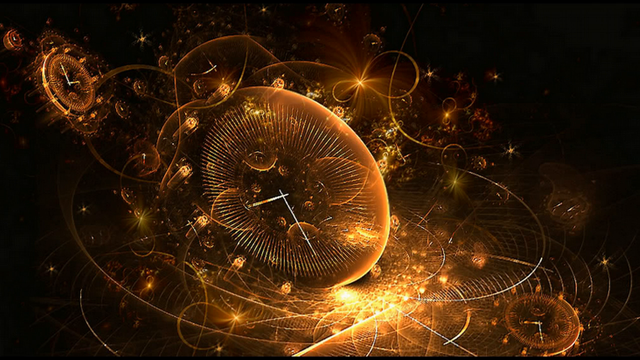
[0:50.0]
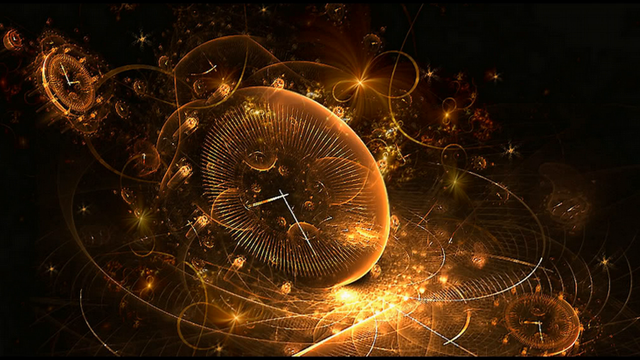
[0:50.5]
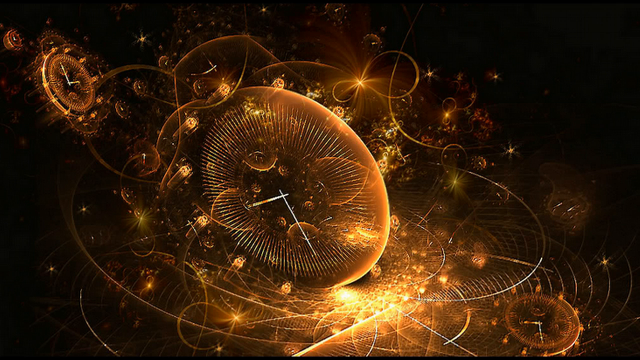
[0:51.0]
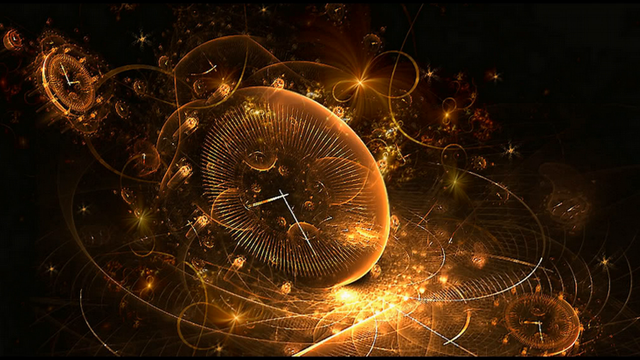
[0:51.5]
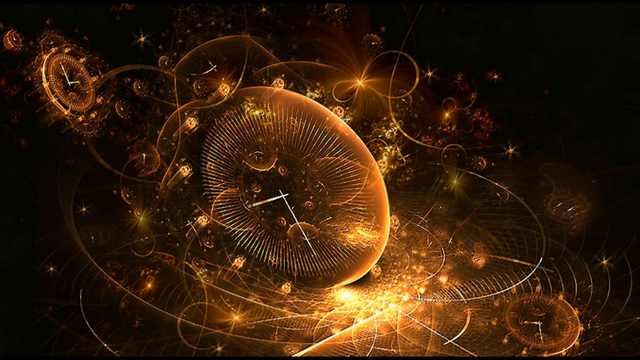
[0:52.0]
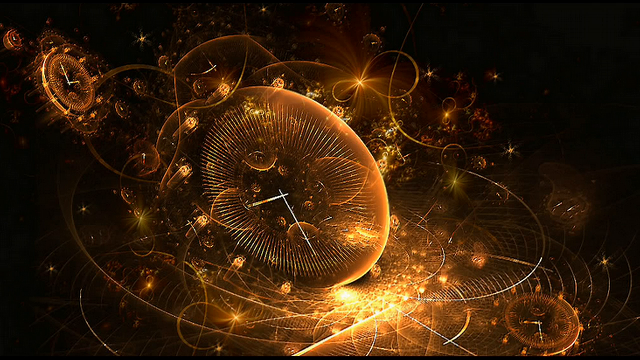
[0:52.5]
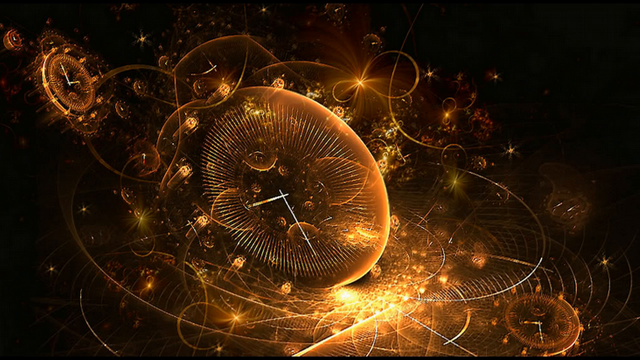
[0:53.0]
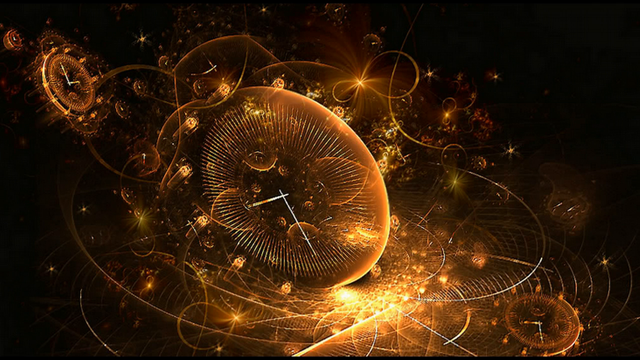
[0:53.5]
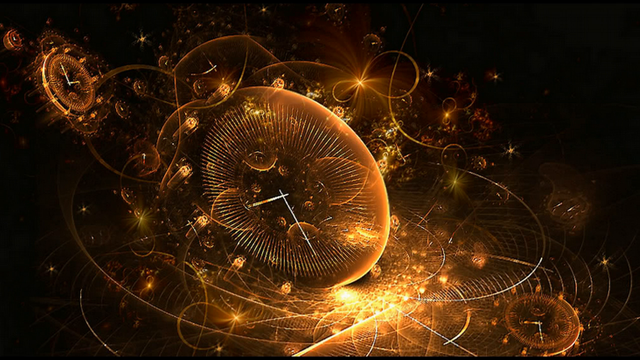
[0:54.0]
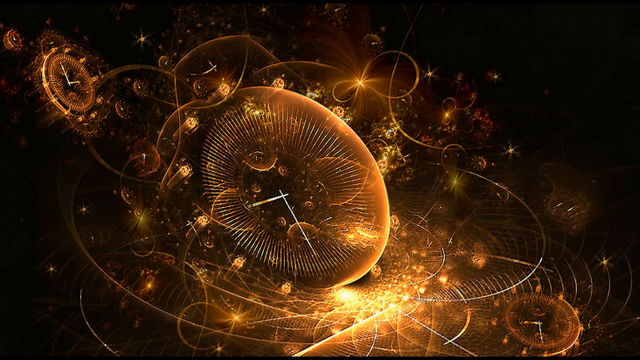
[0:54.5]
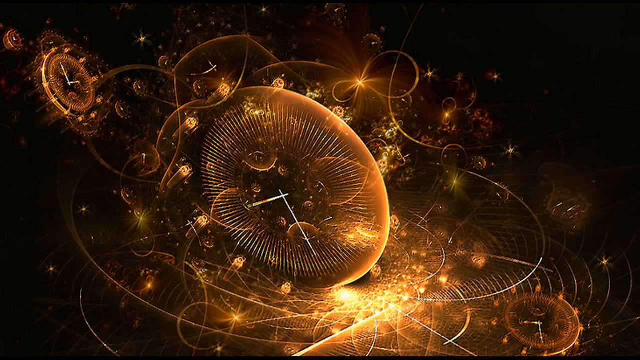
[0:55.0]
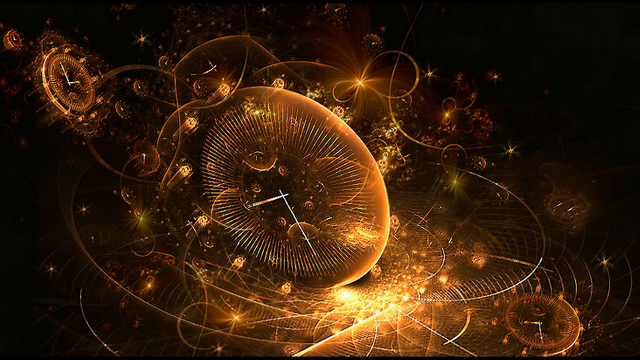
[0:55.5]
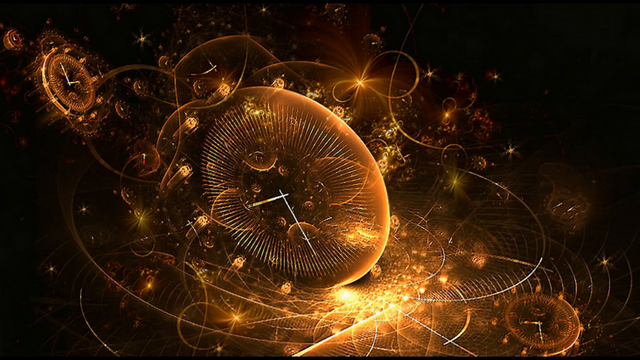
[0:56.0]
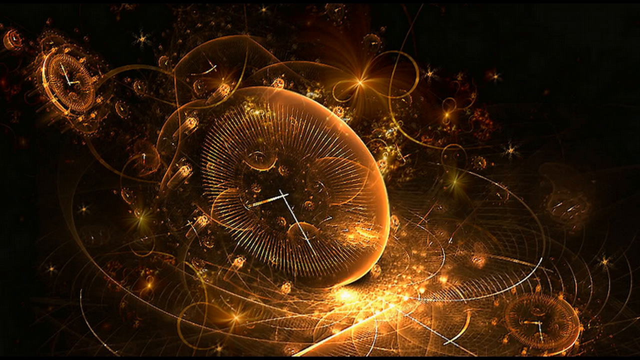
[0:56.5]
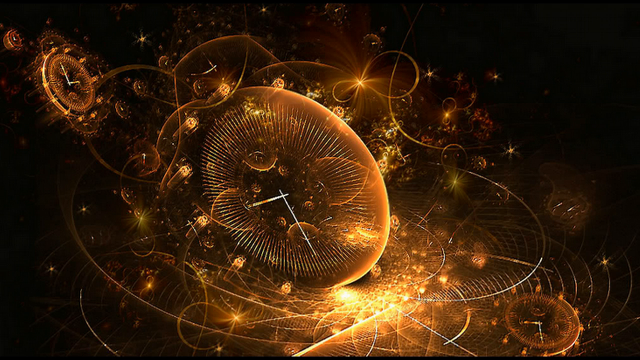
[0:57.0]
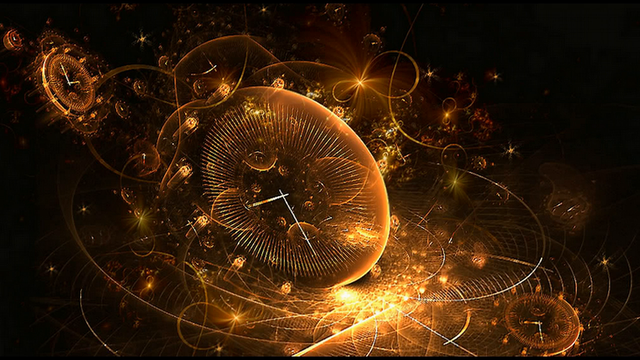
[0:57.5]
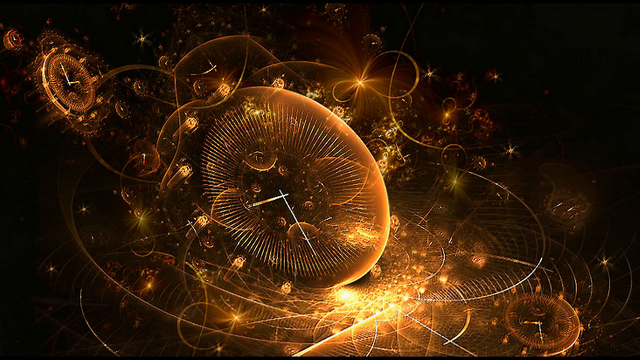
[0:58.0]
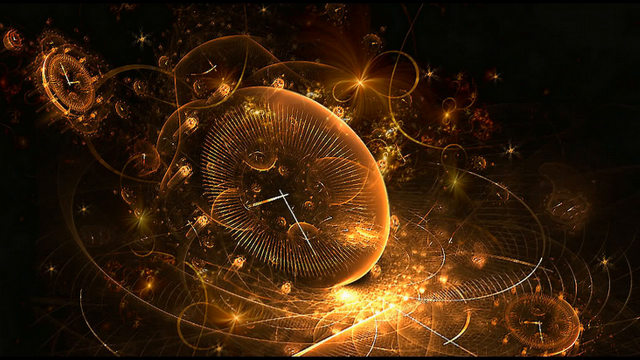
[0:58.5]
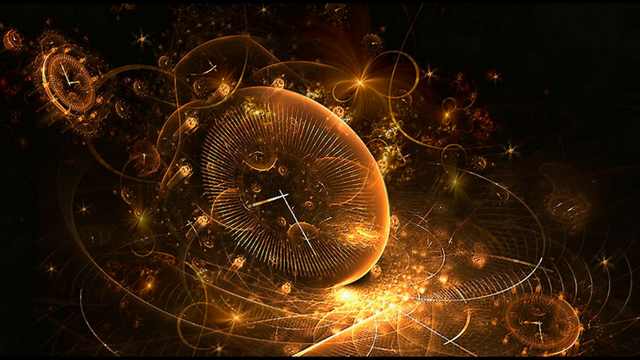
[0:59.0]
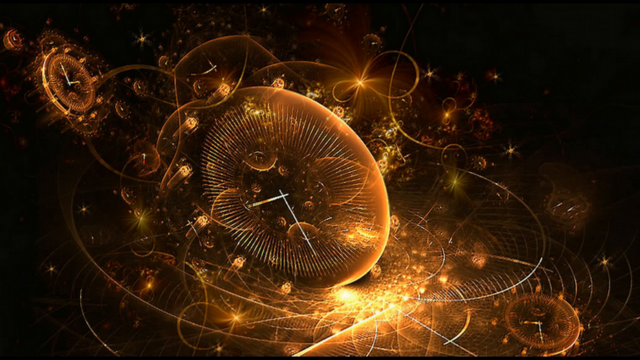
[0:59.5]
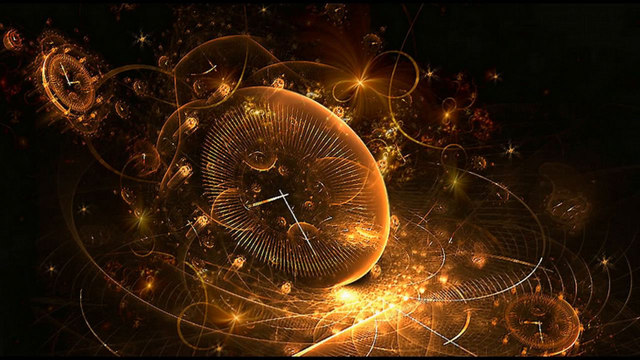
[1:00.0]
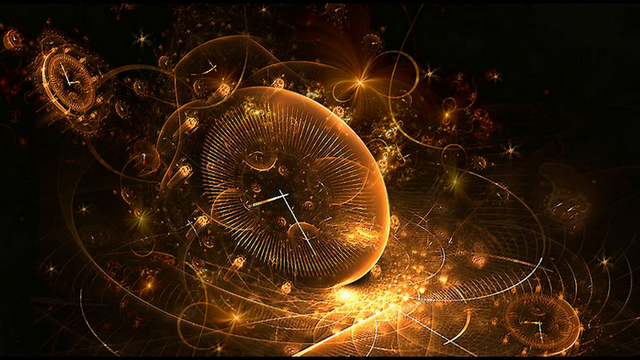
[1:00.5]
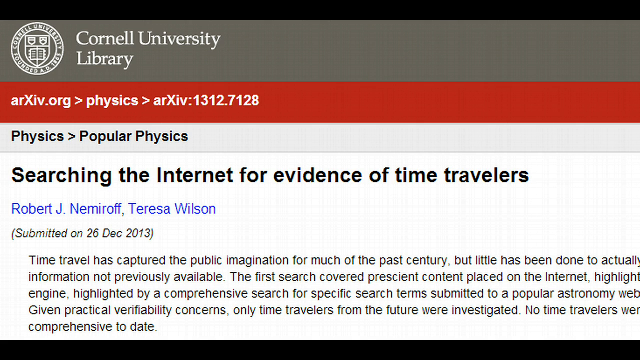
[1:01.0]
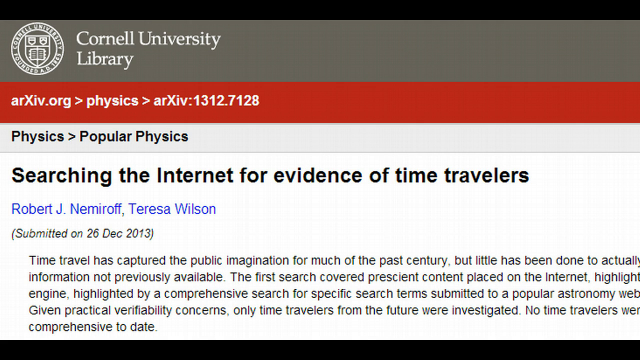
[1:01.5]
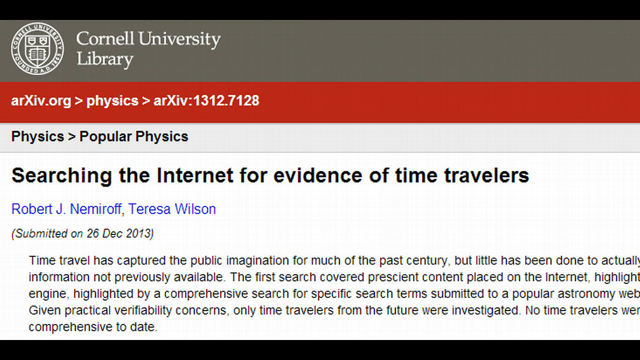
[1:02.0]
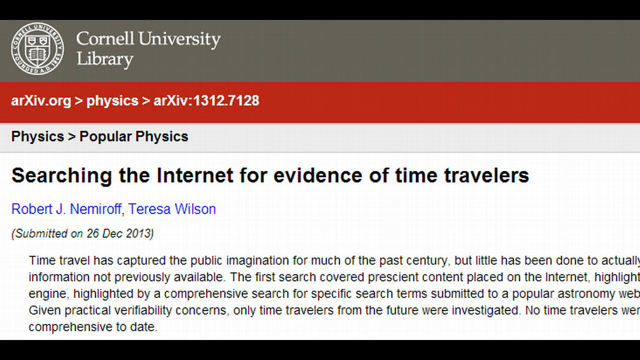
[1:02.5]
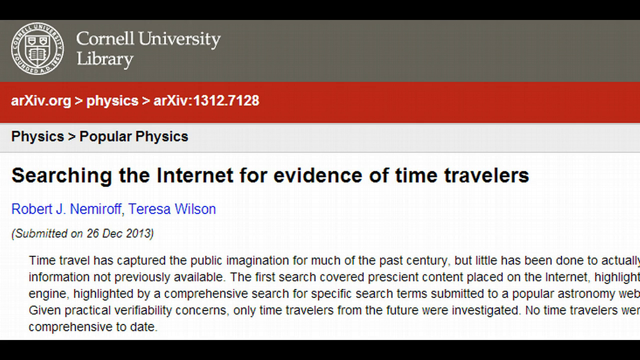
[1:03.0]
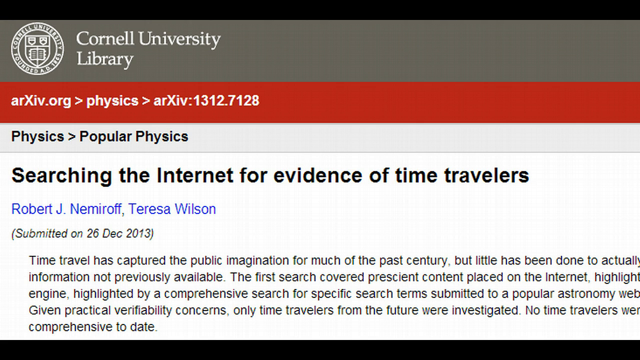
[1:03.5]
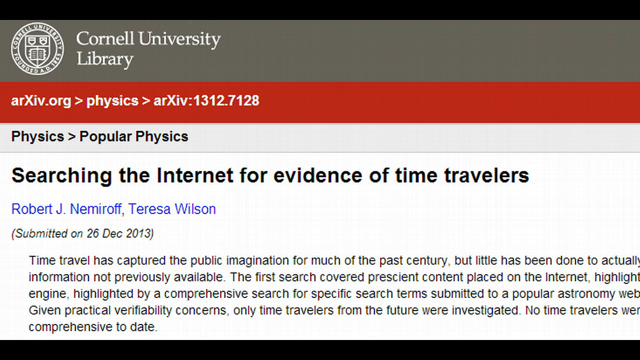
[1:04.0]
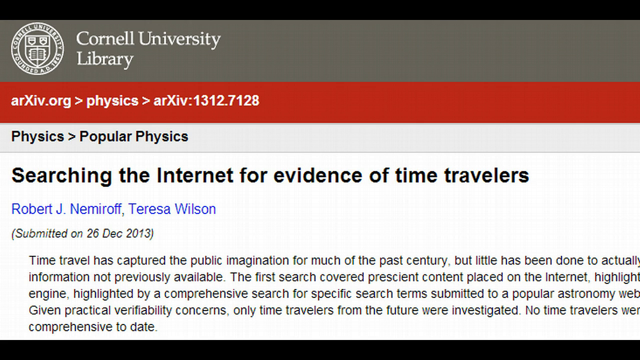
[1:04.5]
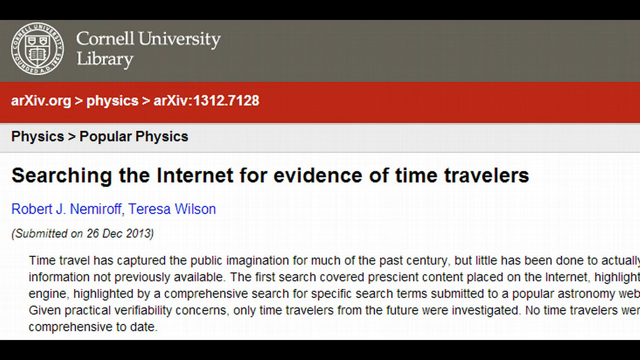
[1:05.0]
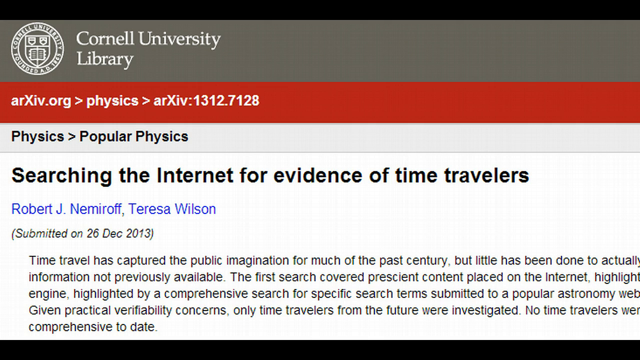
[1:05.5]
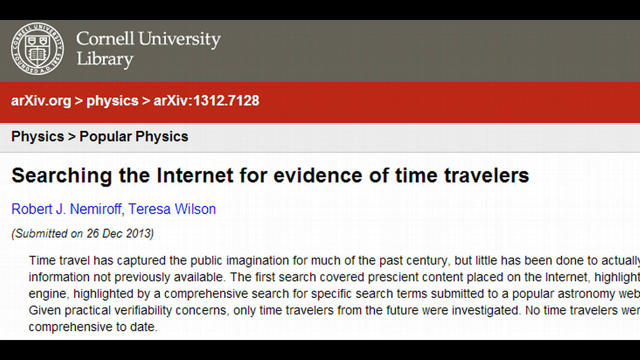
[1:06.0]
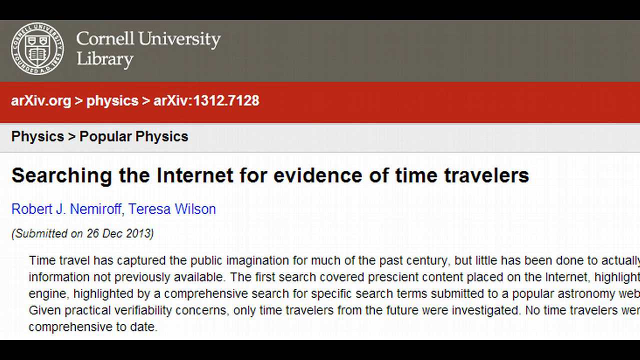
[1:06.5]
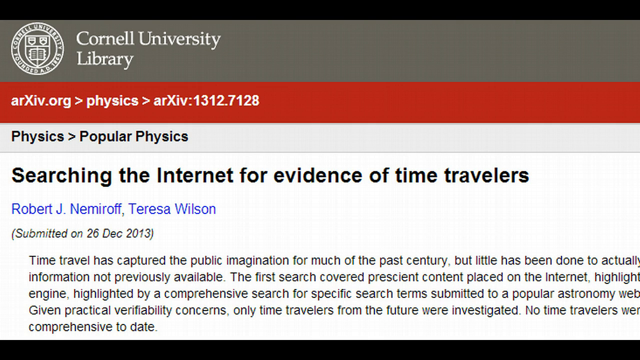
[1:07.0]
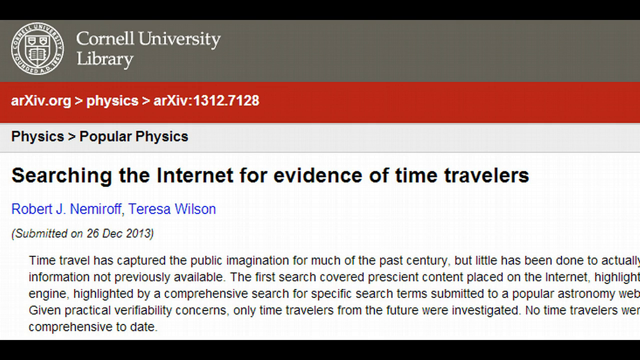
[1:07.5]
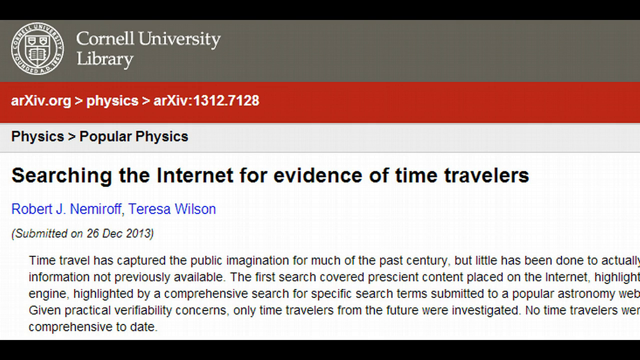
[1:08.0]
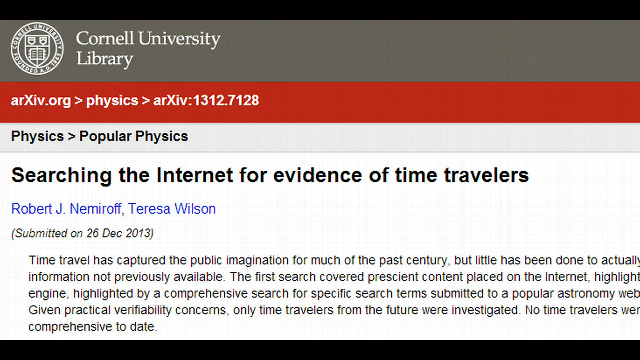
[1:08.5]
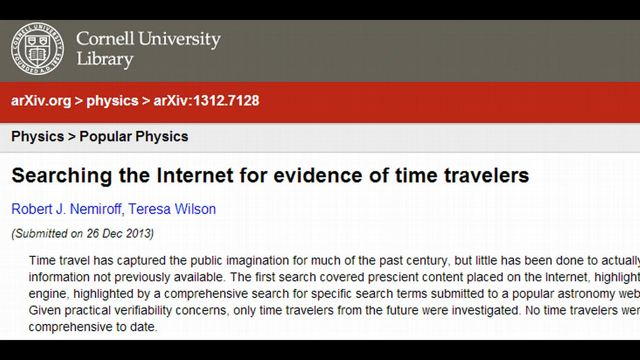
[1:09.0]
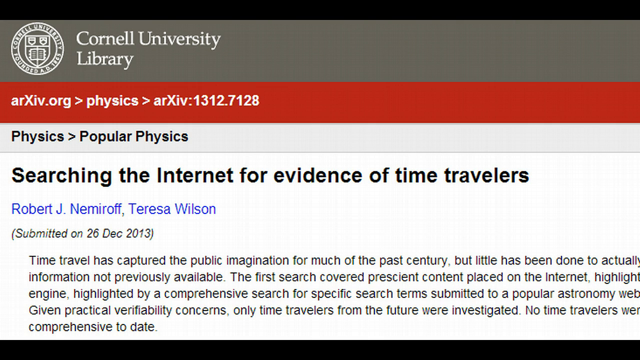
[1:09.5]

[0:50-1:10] The still image of the variety of clocks, grouped together yet separated in some way, stays on screen. Then an image of an article from the Cornell University Library appears. The article is about physics, specifically about searching the internet for evidence of time travelers. Its authors are Robert J. Nemiroff and Teresa Wilson, and it was published on December 26, 2013.